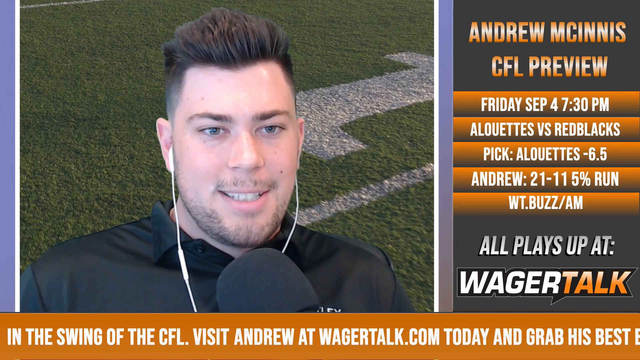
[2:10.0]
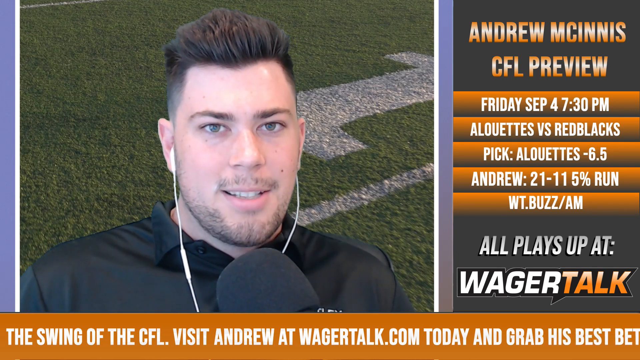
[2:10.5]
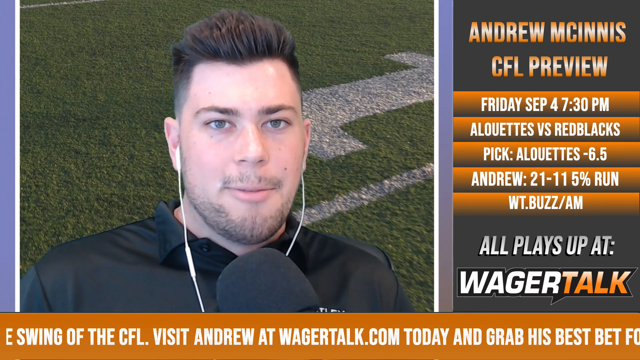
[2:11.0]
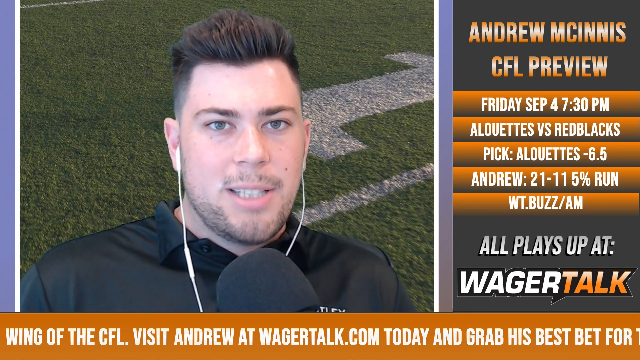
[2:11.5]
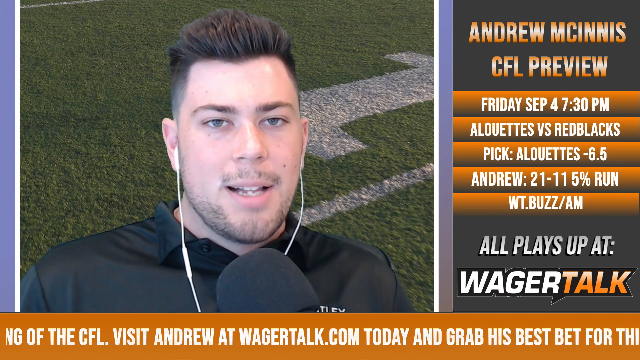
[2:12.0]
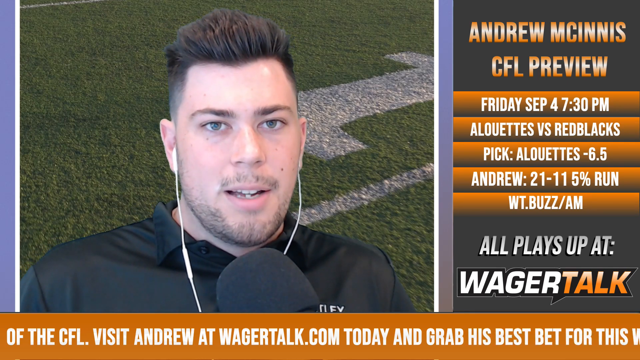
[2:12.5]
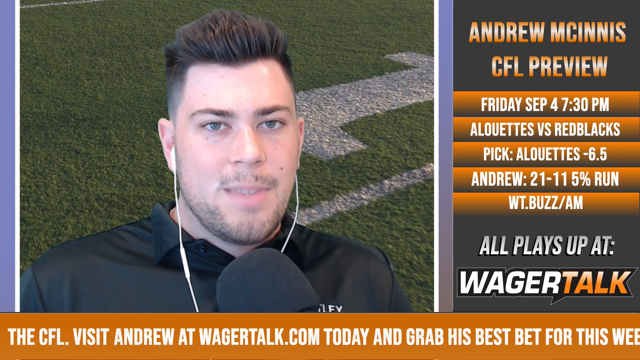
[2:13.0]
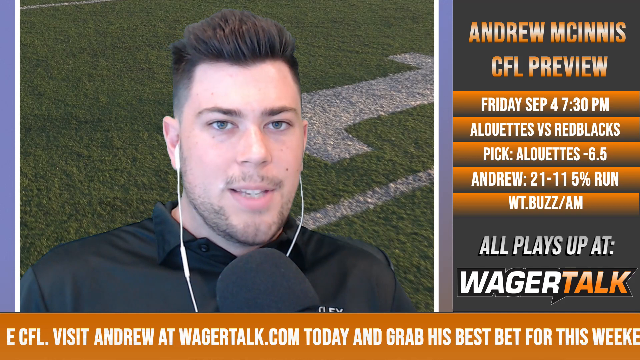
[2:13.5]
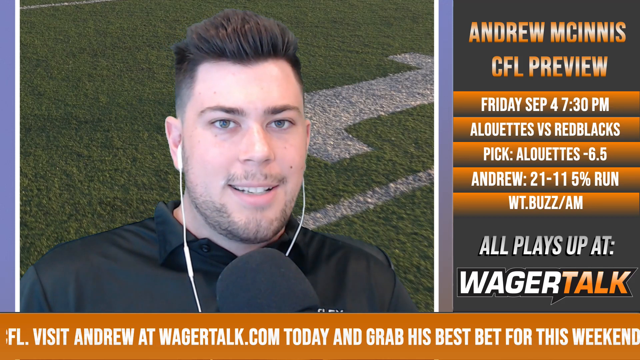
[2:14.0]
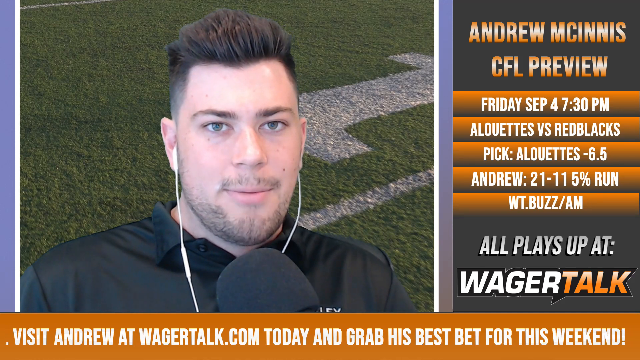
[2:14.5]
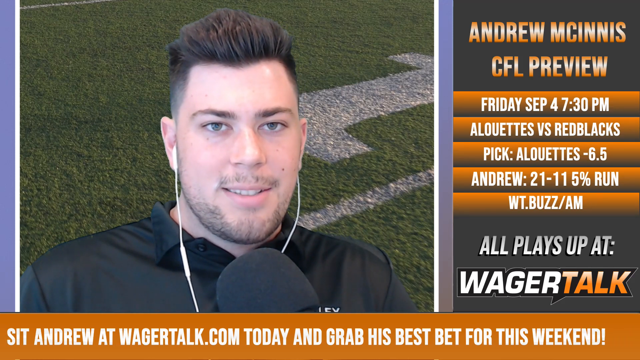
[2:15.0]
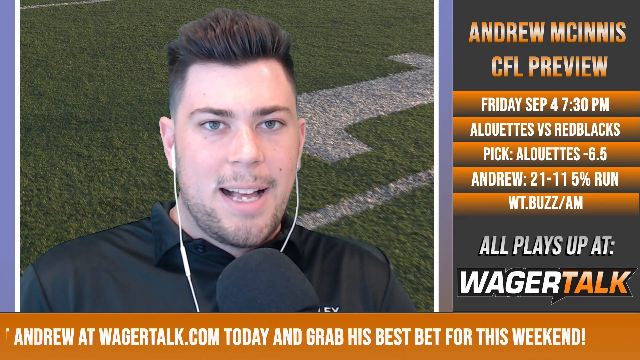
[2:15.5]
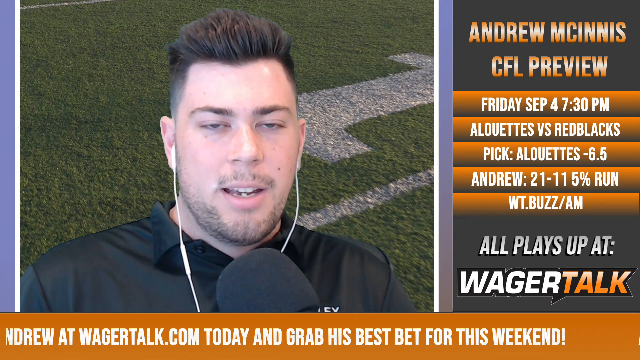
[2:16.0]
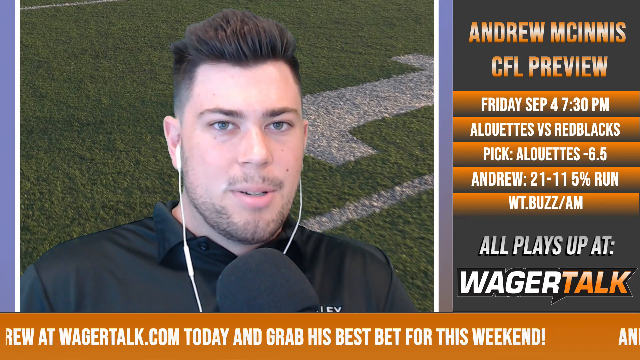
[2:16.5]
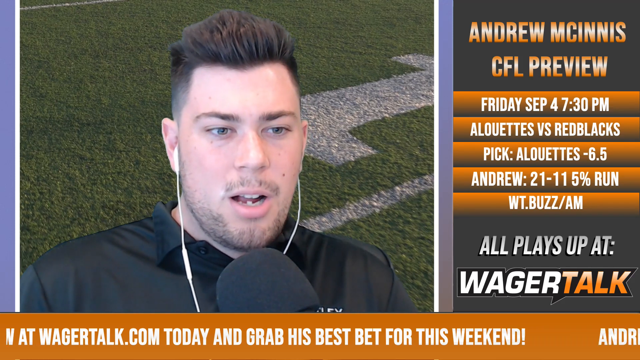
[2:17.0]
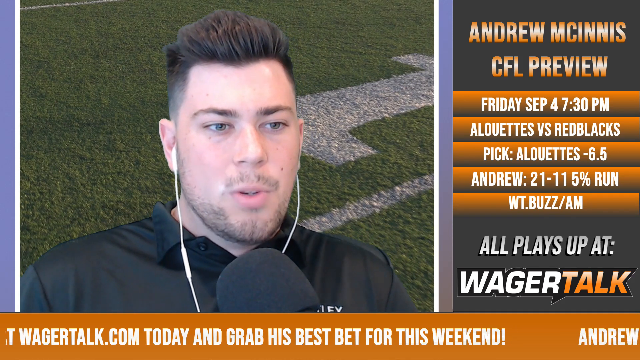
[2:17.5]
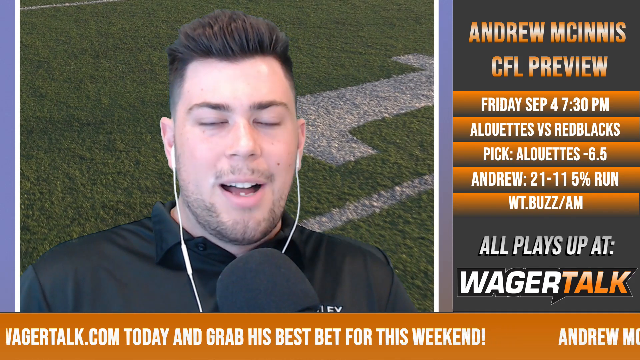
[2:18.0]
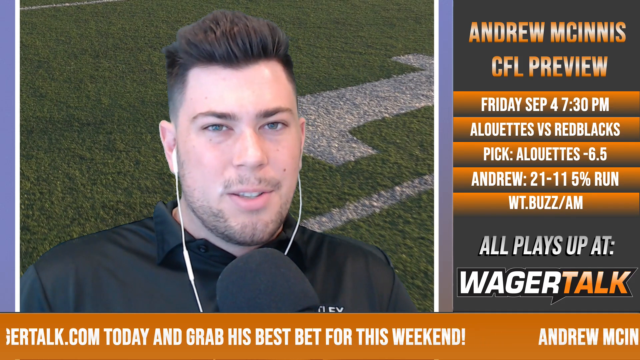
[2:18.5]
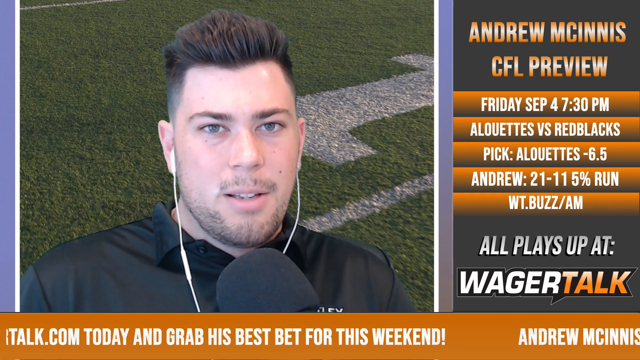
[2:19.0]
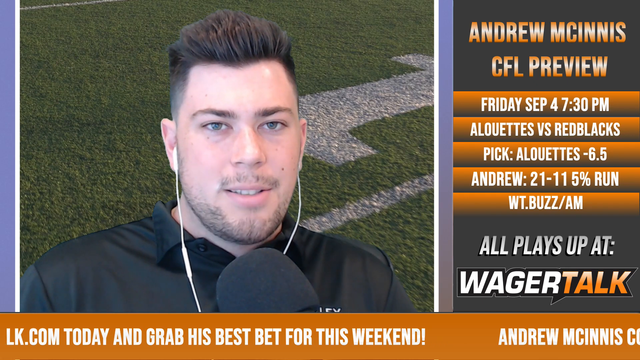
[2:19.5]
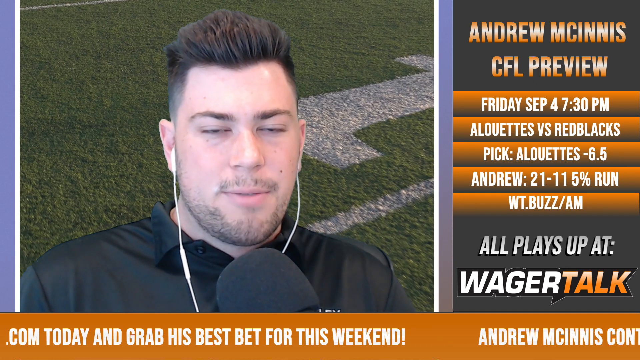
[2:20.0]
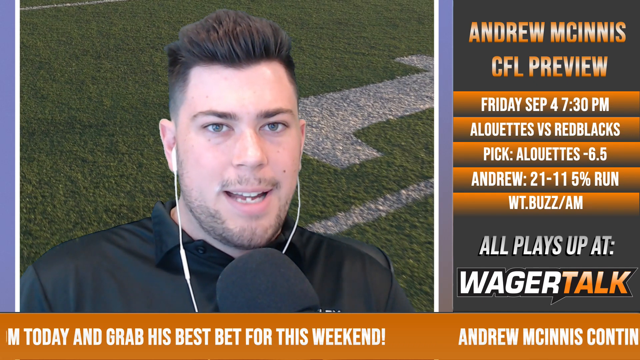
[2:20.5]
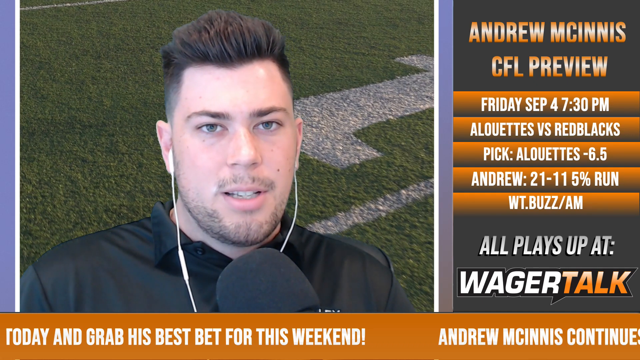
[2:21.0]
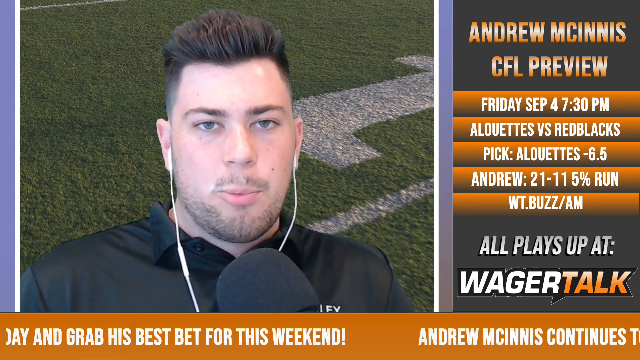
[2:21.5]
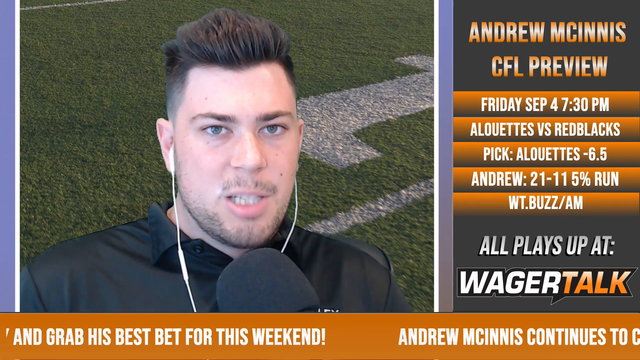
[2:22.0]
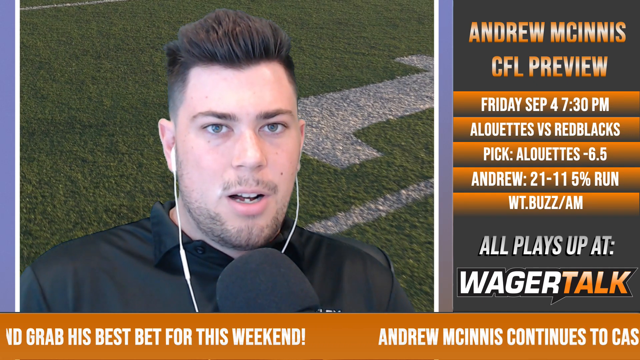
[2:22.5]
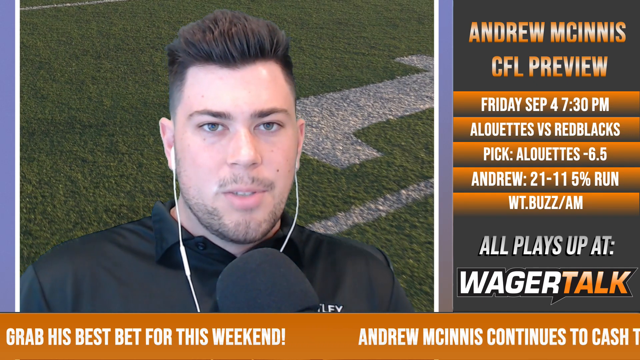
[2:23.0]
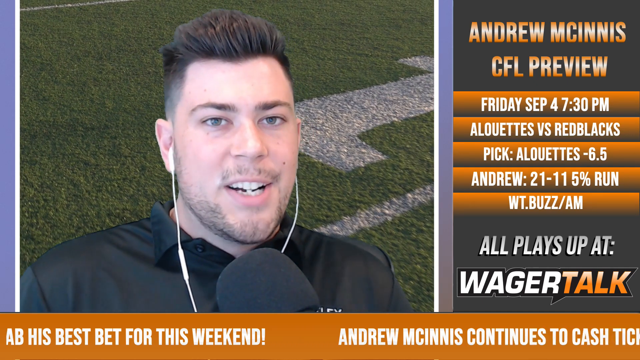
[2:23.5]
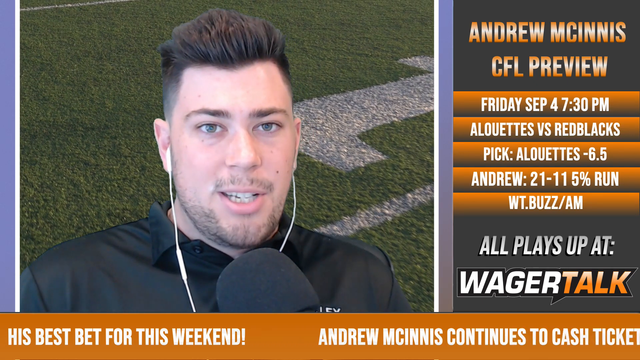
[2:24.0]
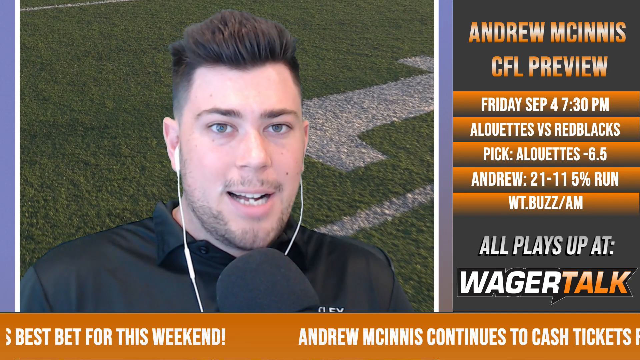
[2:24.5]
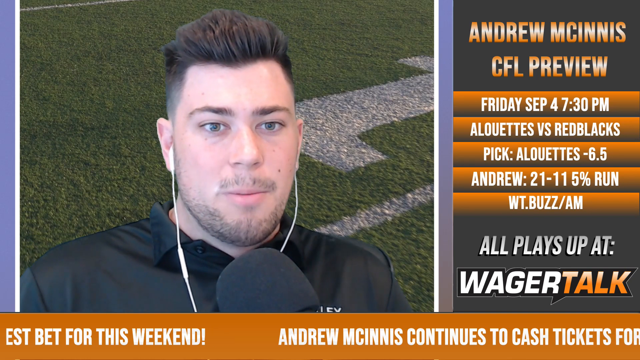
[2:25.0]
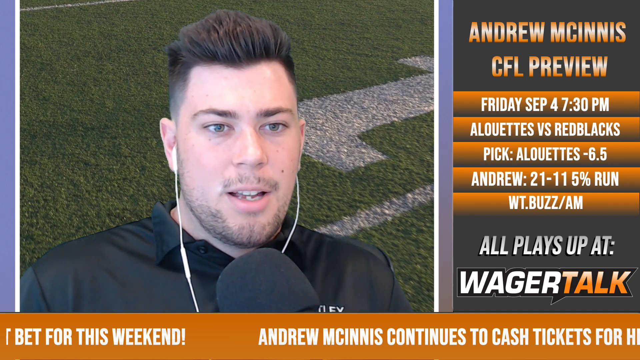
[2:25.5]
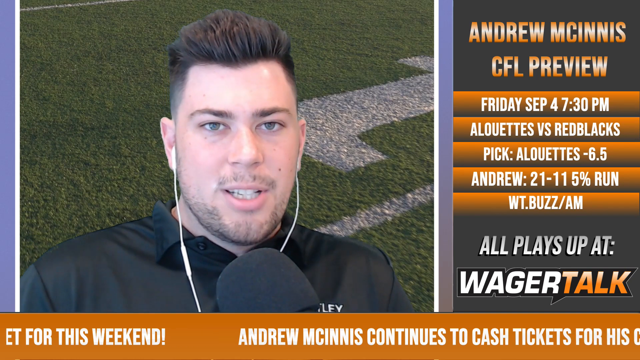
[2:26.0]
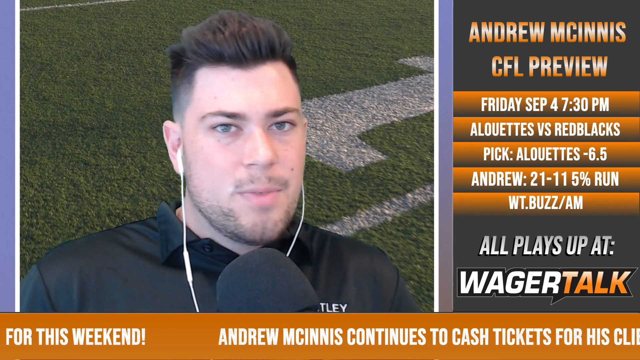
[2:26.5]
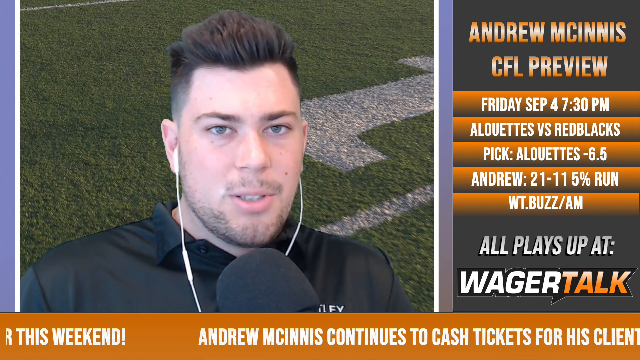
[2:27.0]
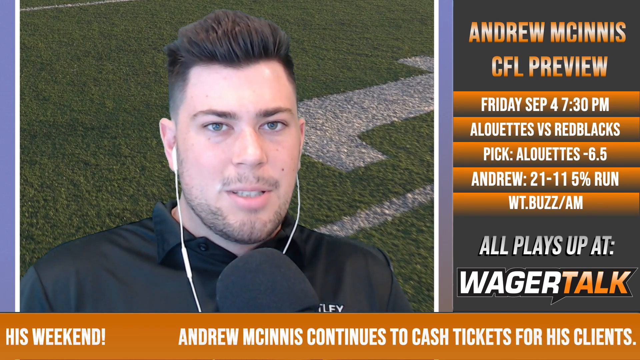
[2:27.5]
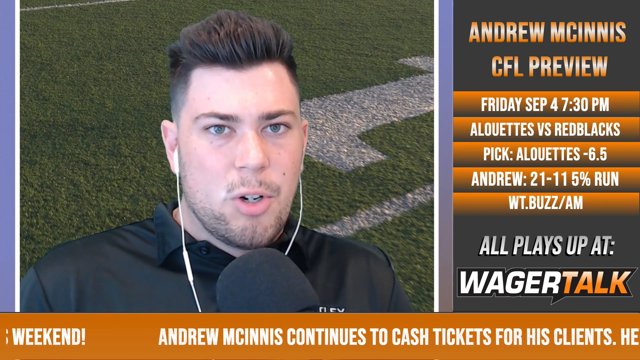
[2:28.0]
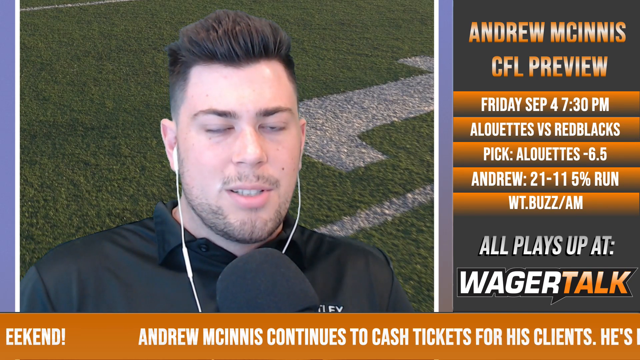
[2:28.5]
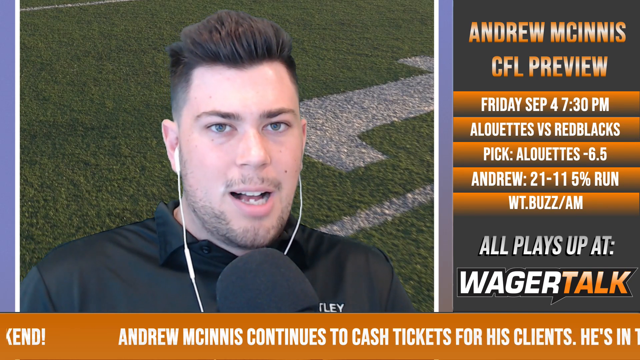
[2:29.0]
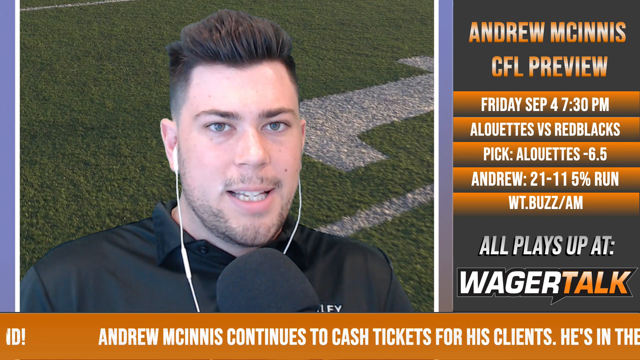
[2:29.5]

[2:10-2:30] A man talks into a large, fluffy black microphone that looks soft, squishy and foam-like. His black shirt looks smooth and shiny, with a pointy collar whose tips are kind of triangular. A circular button is on the left-hand side of the screen, and on both shoulders the seams where the sleeves were sewn on are visible. He wears tiny white earbuds that go only into his ear canals without covering his ears, apparently made of shiny smooth plastic. A thin white wire looks to come out of both of them, and on the left one, about two to three inches down from his ear, there is a thicker white plastic piece attached.